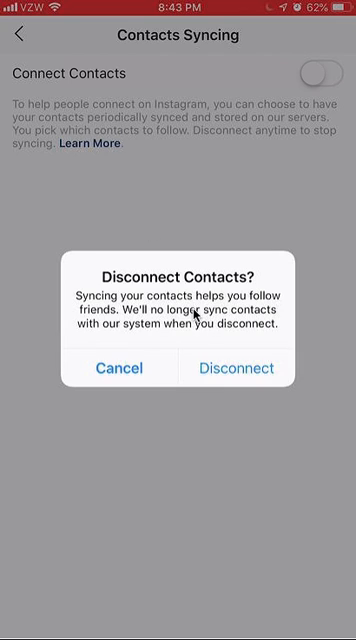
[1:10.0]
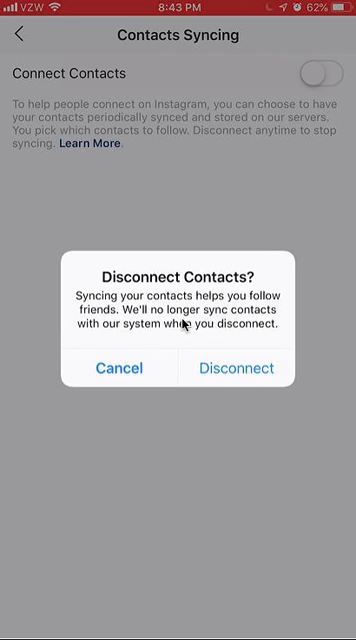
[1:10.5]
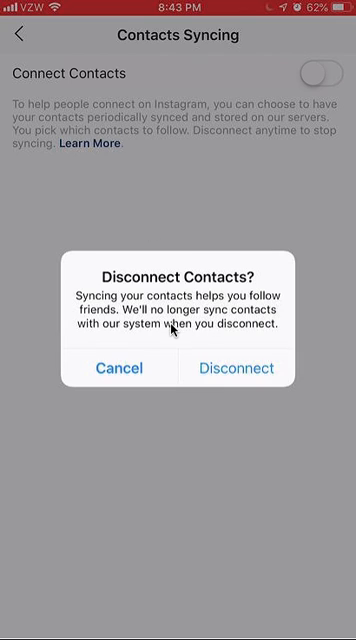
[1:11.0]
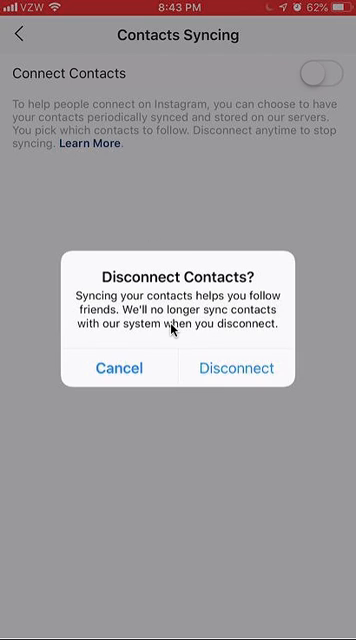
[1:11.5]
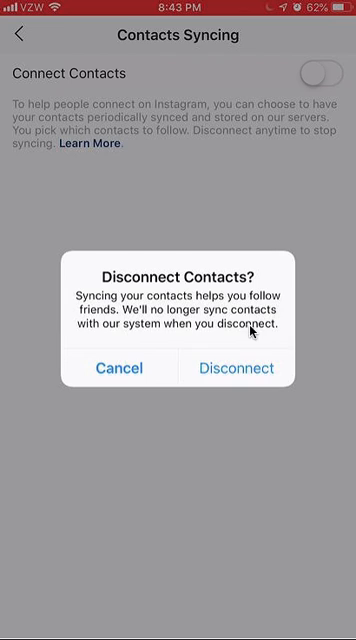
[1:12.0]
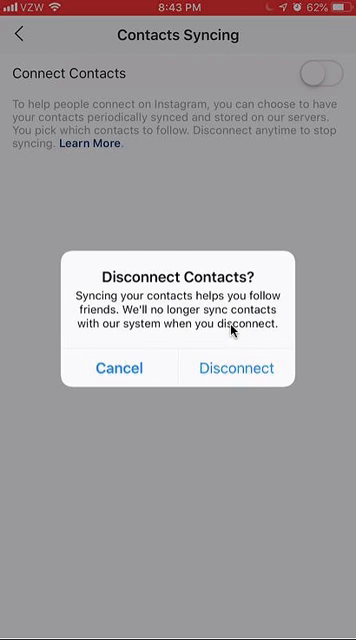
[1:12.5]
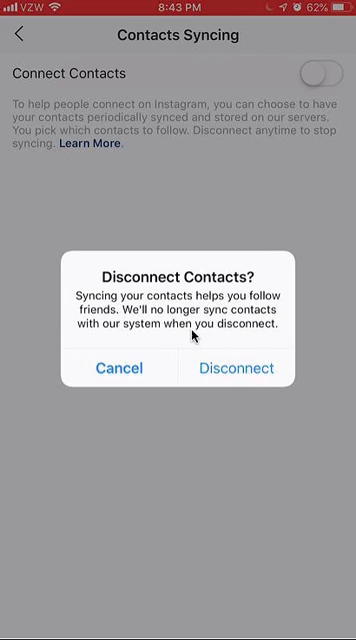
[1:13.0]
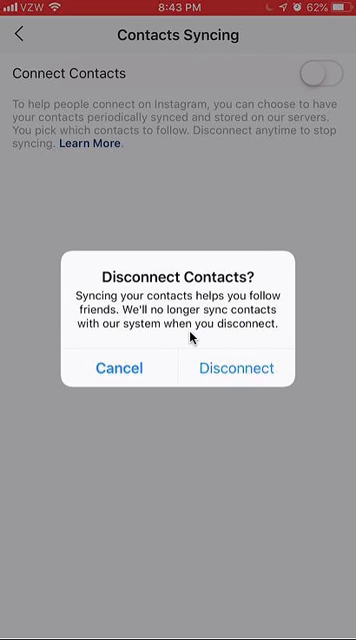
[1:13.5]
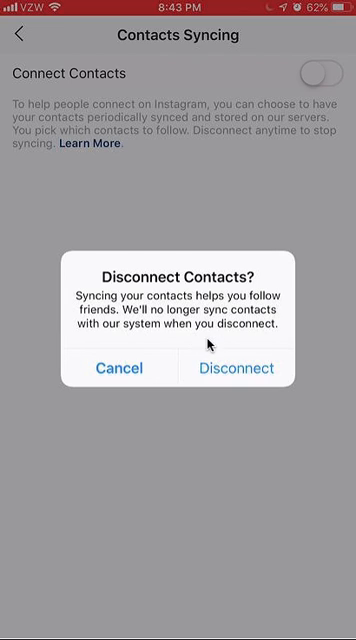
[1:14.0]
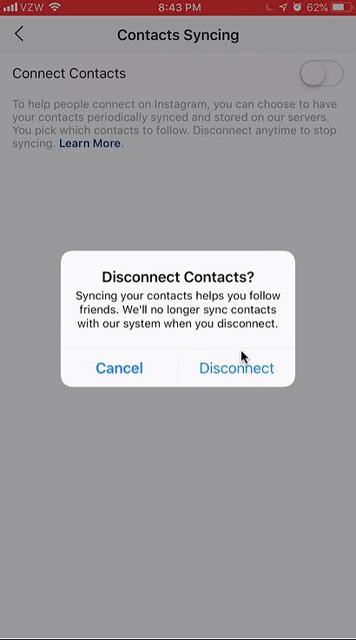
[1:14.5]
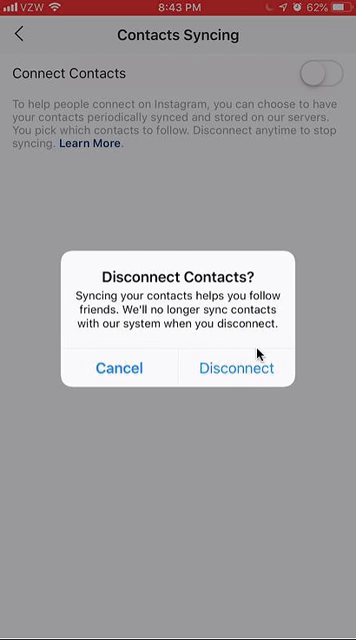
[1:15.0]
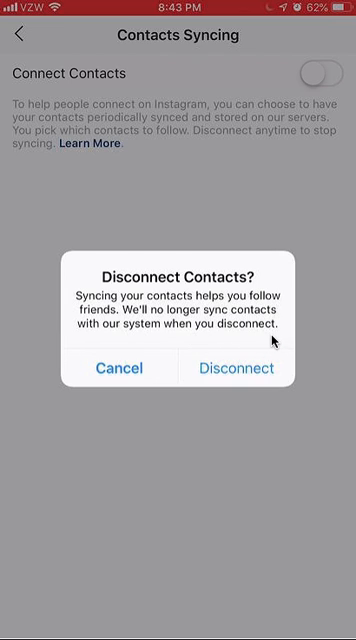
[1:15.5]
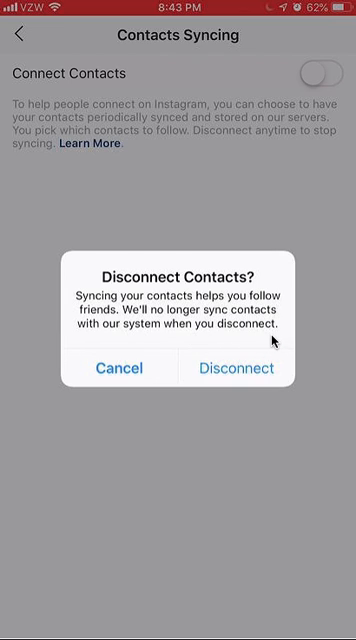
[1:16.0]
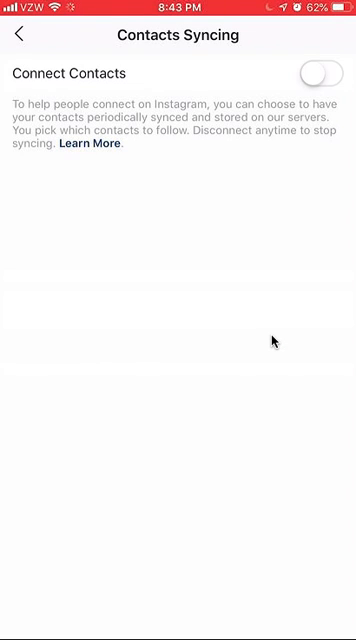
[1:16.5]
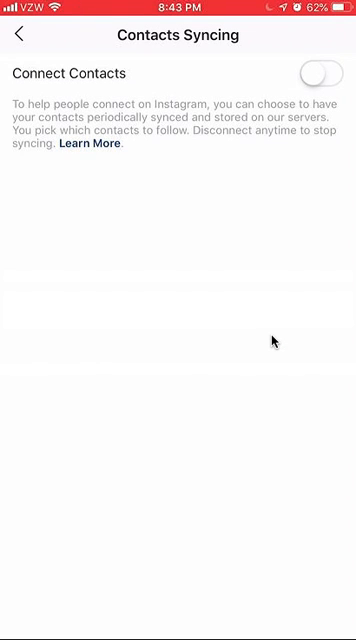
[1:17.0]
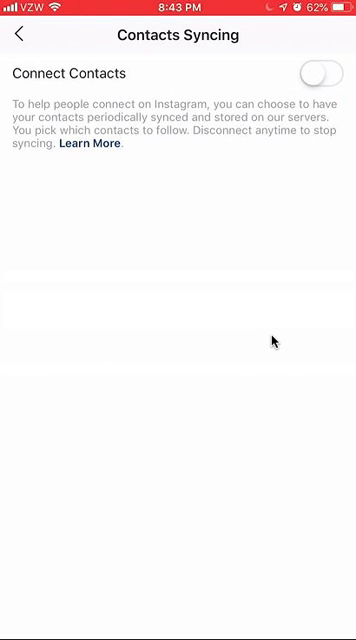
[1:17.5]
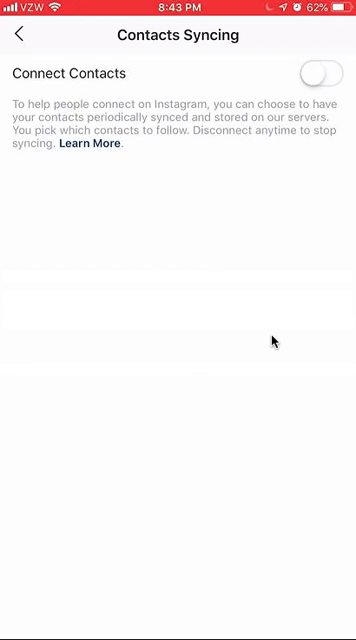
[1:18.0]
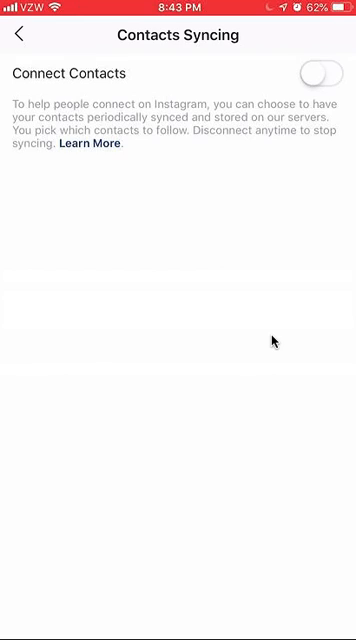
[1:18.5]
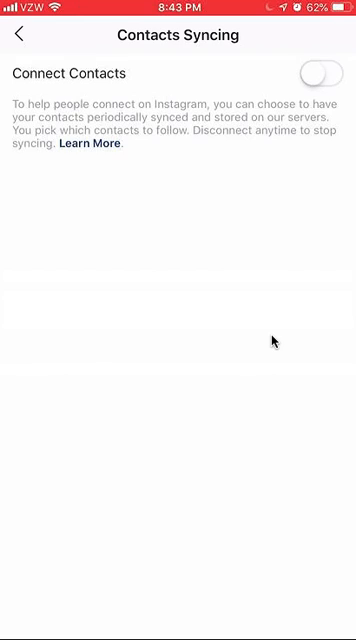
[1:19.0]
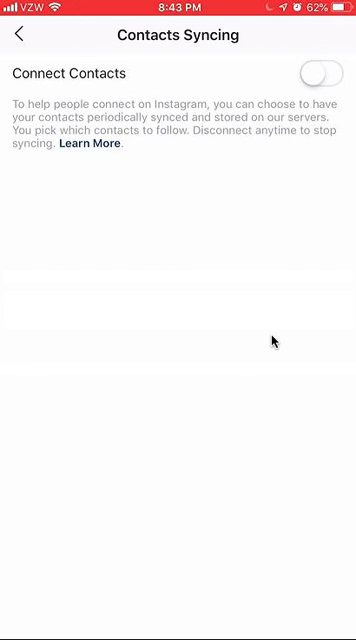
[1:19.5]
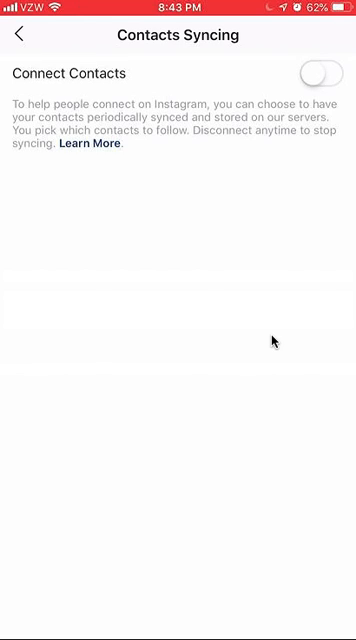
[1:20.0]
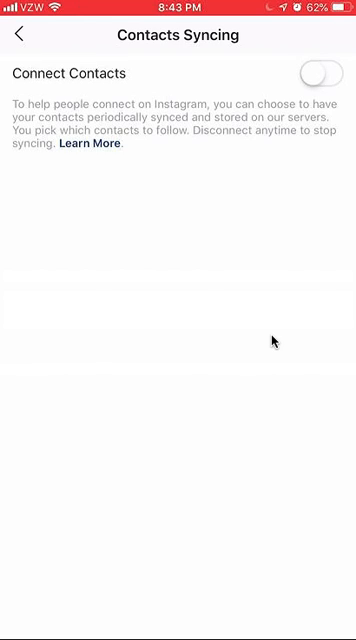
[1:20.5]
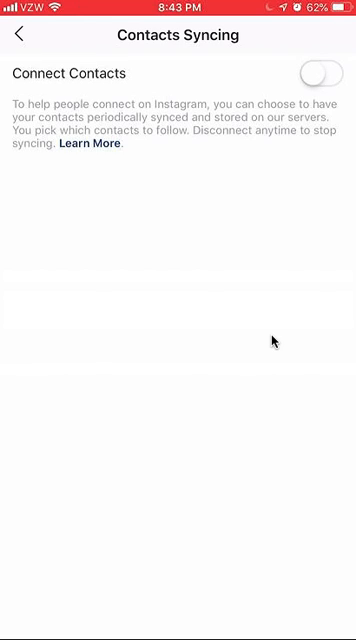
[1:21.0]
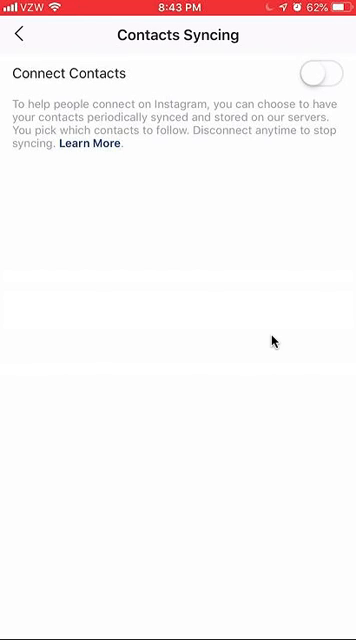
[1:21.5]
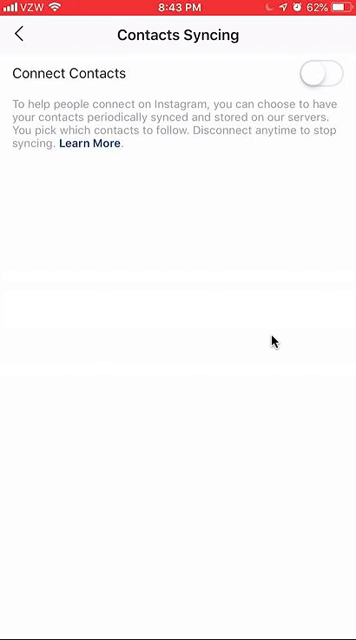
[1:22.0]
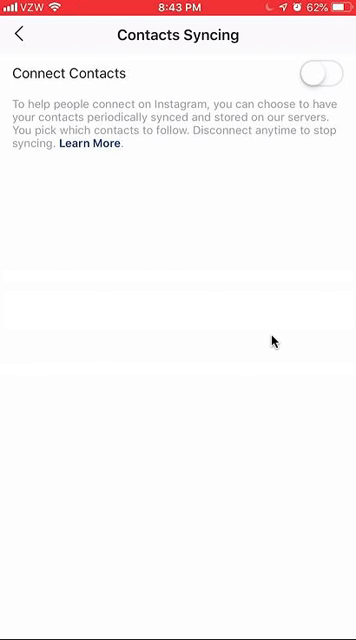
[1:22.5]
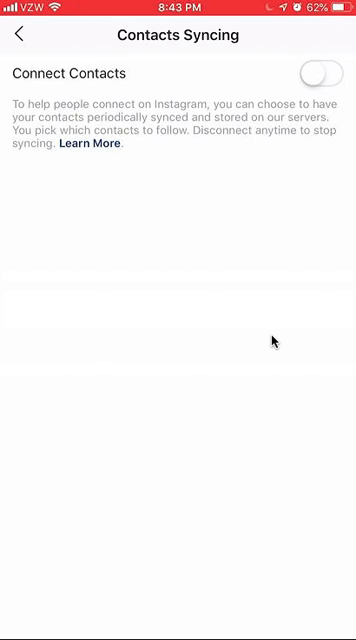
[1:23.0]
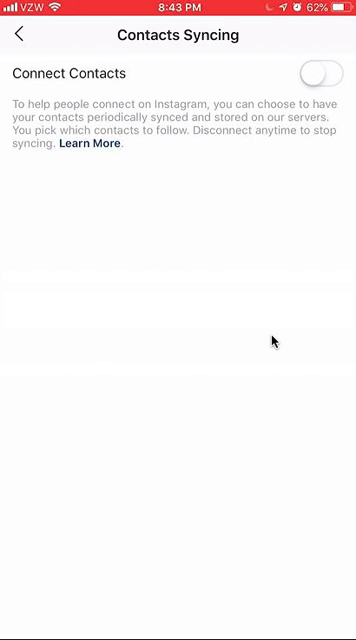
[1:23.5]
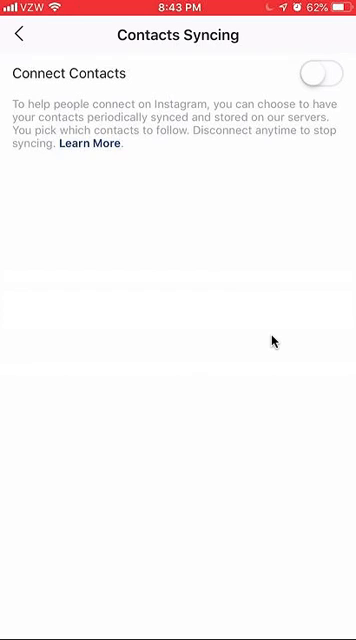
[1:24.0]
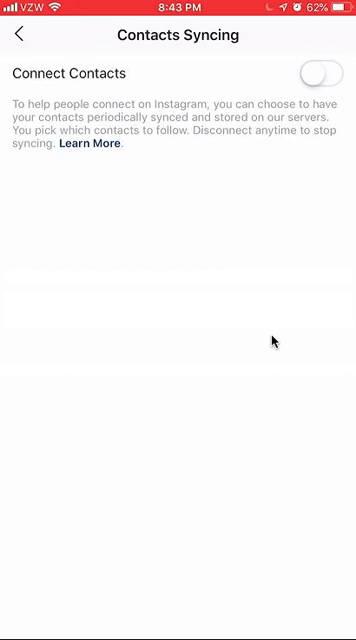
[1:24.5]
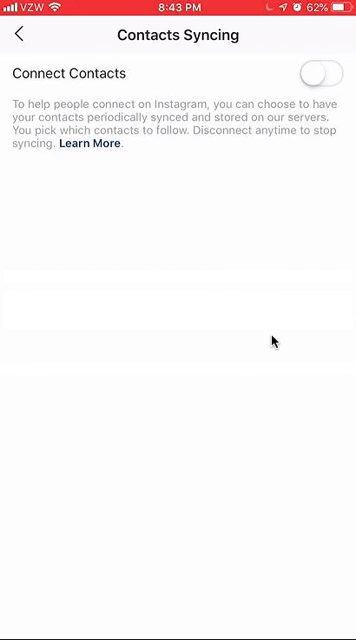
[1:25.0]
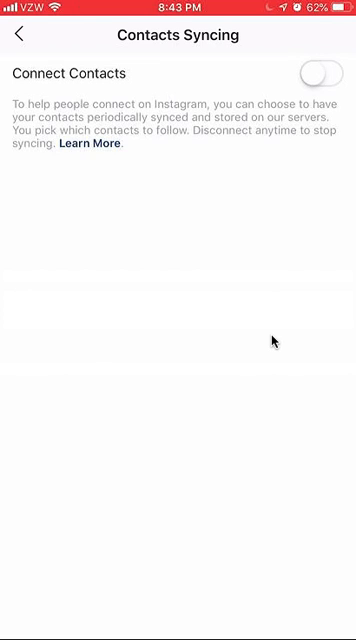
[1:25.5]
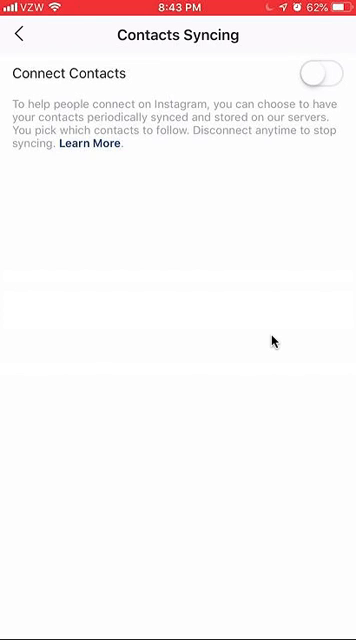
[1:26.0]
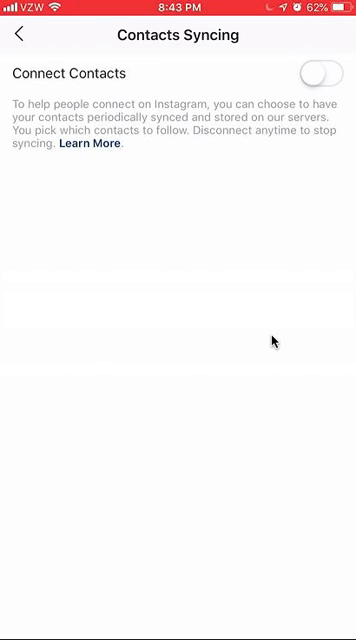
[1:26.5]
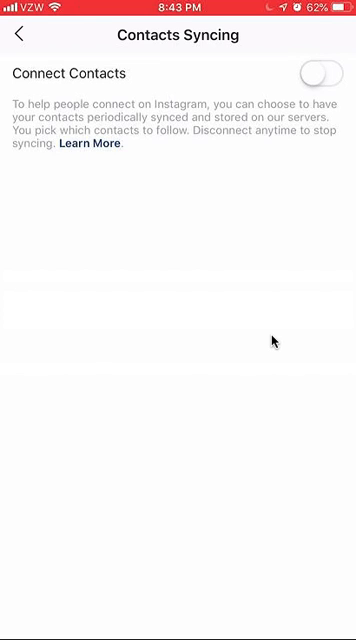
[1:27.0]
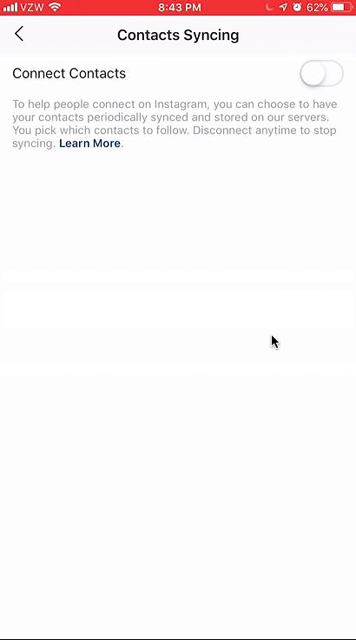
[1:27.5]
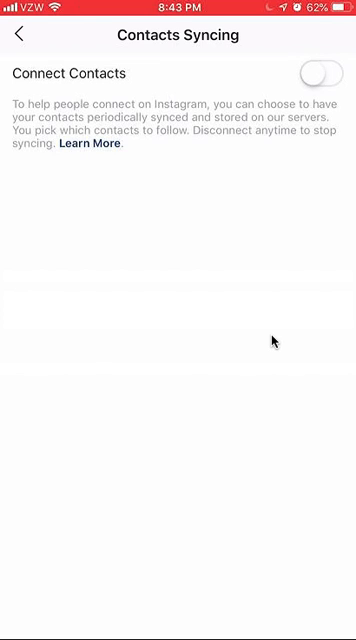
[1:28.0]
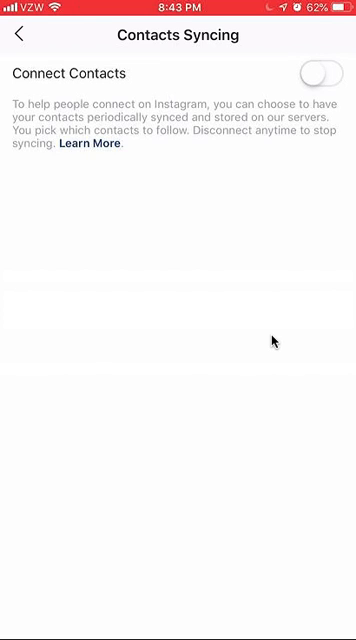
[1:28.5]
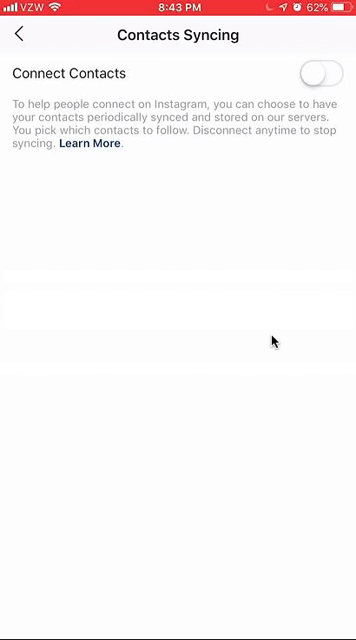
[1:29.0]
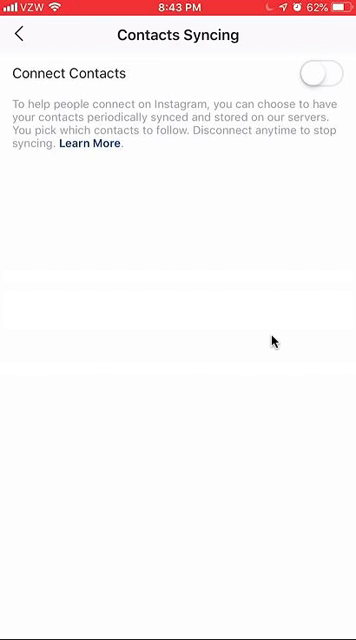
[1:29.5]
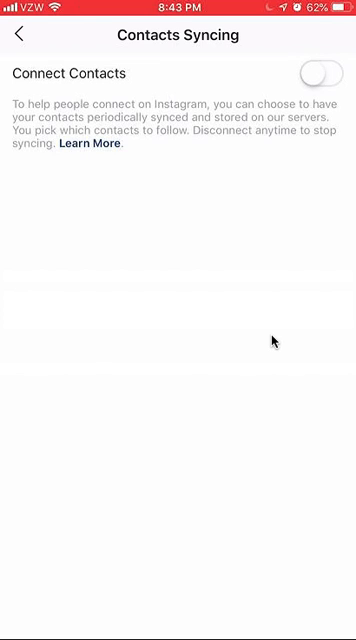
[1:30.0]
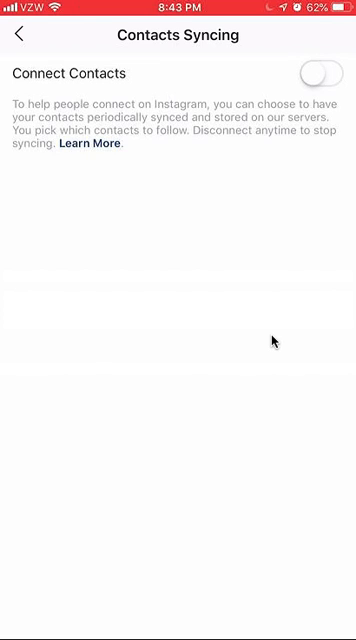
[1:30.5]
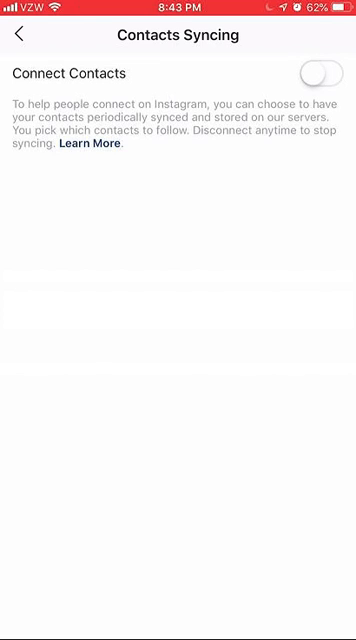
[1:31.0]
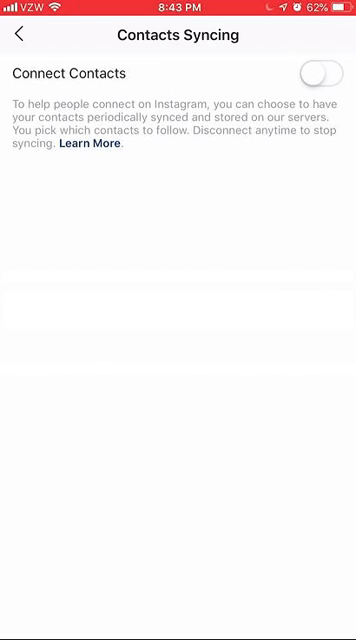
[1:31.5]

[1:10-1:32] The disconnect contacts modal window remains on screen, with the options to cancel or disconnect. The mouse cursor moves toward disconnect and presses it. Contact syncing is now disconnected, and the screen stays on the contact syncing page with the setting turned off. The phone is on the Verizon network with full bars and full Wi-Fi connectivity, and the time shows 8:43 p.m. There appears to be an alarm set, and the battery remains at 62%. The connect contacts information remains visible, reading "To help people connect on Instagram, you can choose to have your contact periodically synced and stored on our servers. You pick which contacts to follow, disconnect any time to stop syncing, learn more."